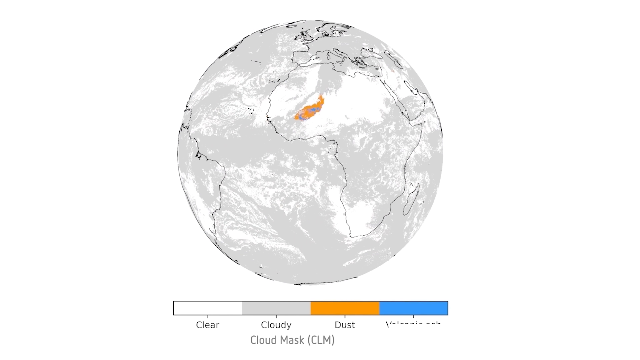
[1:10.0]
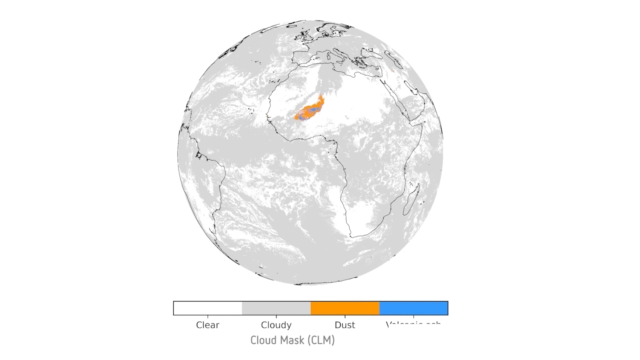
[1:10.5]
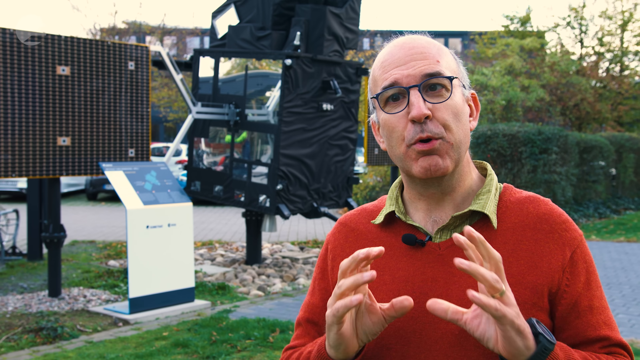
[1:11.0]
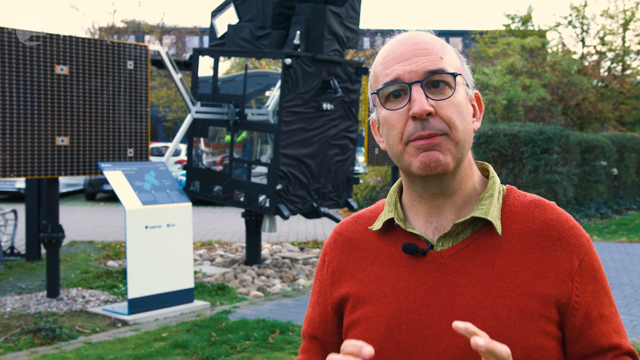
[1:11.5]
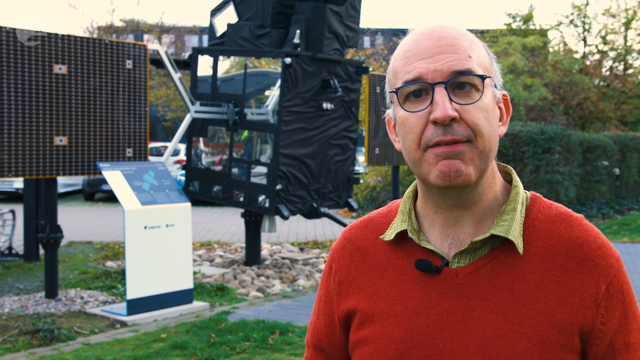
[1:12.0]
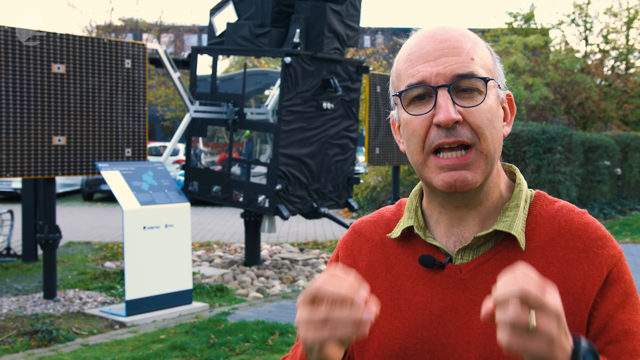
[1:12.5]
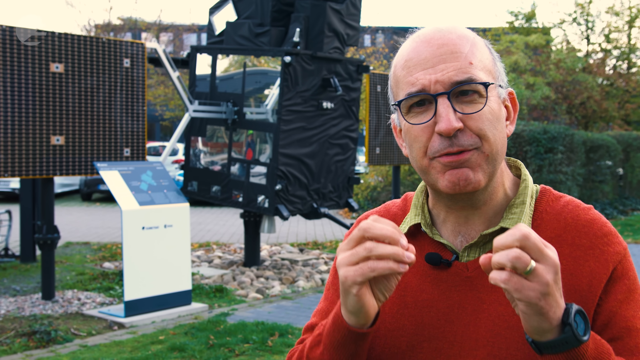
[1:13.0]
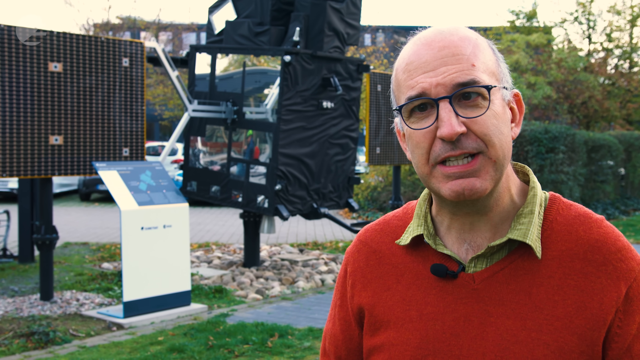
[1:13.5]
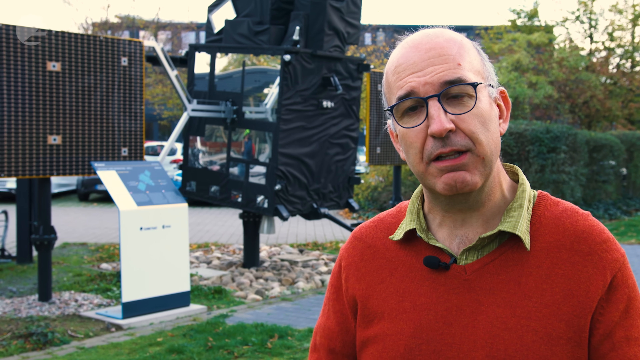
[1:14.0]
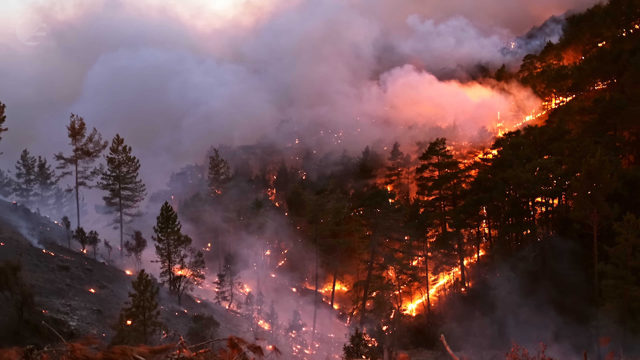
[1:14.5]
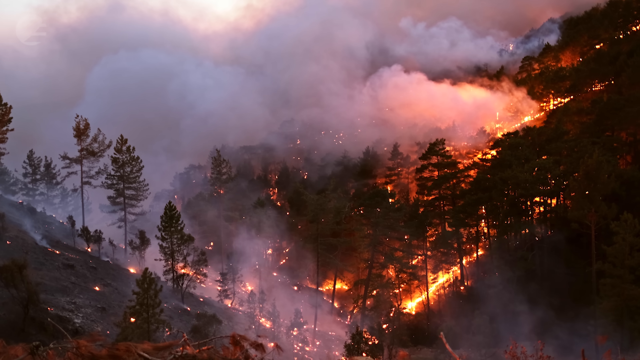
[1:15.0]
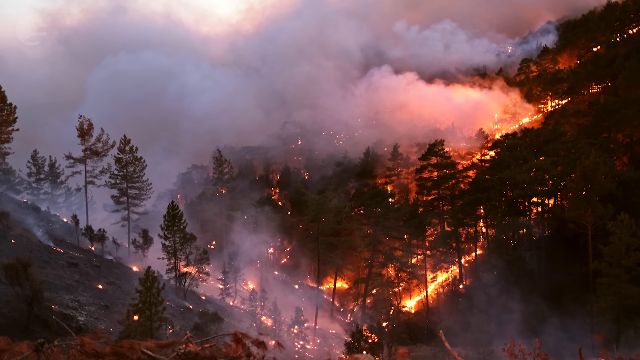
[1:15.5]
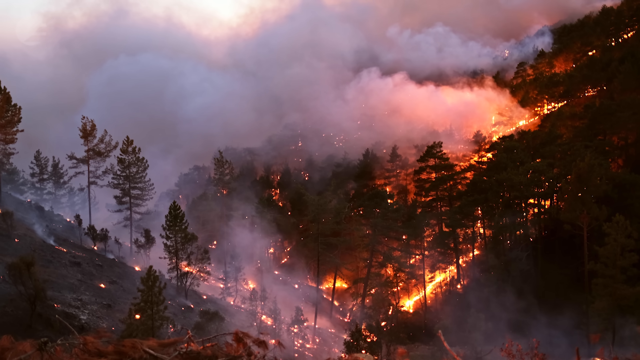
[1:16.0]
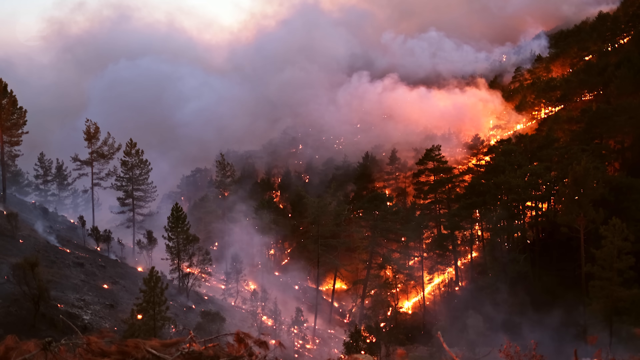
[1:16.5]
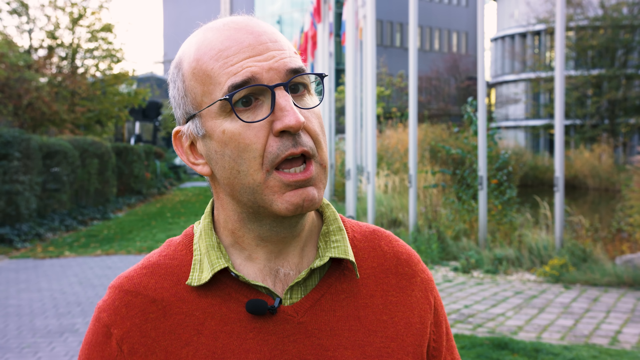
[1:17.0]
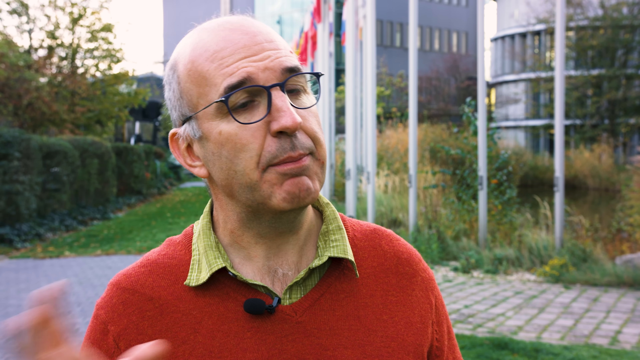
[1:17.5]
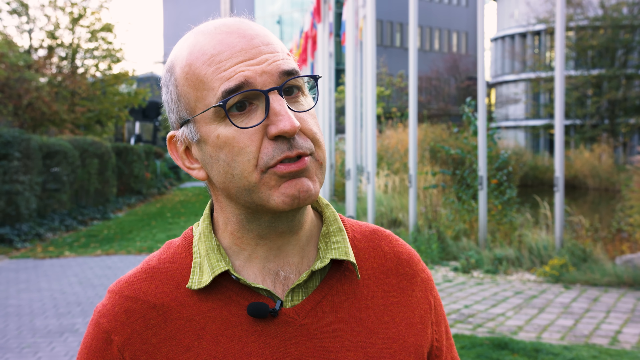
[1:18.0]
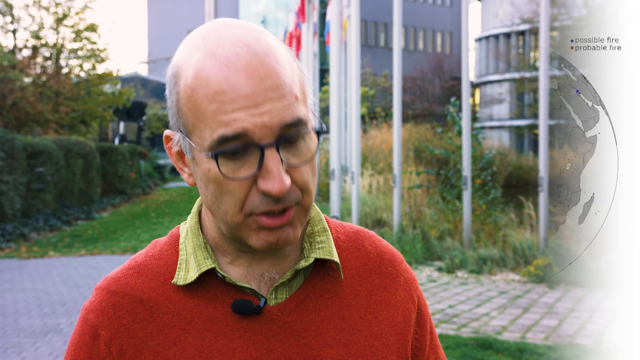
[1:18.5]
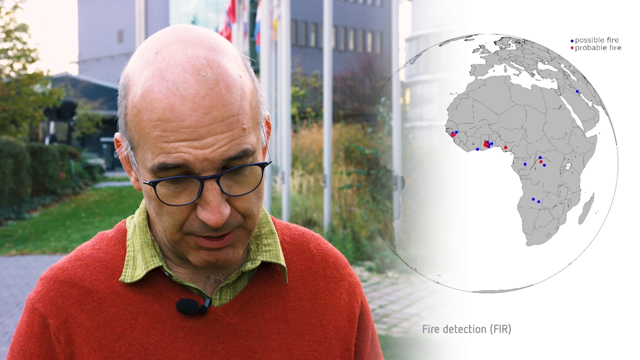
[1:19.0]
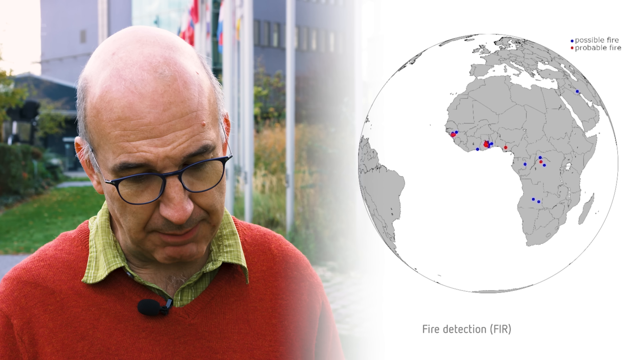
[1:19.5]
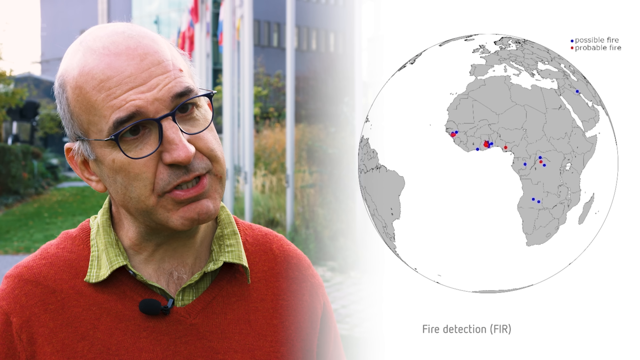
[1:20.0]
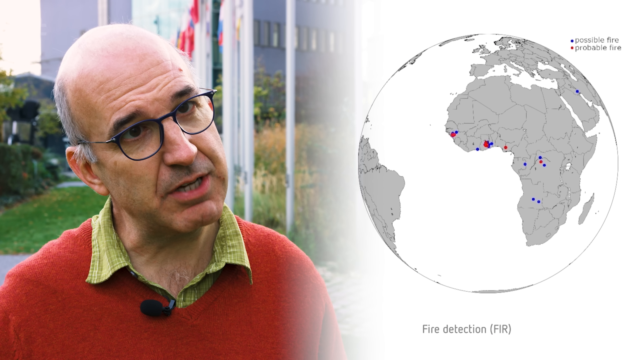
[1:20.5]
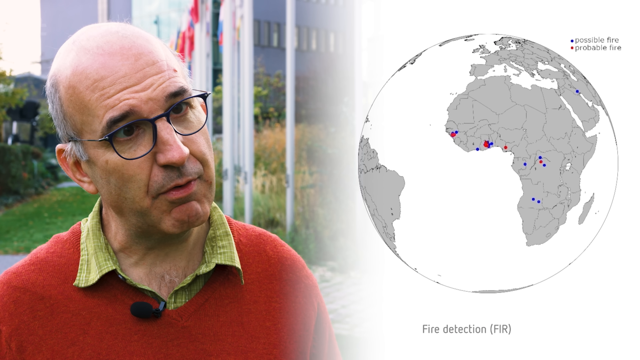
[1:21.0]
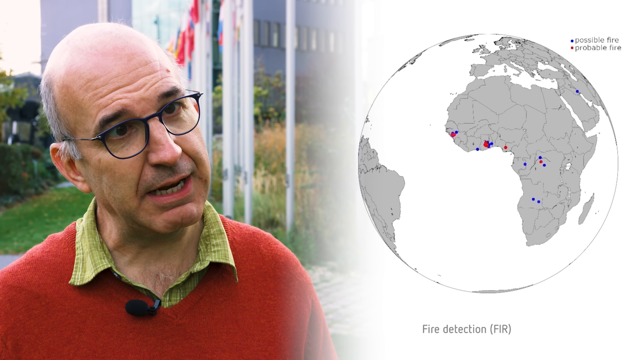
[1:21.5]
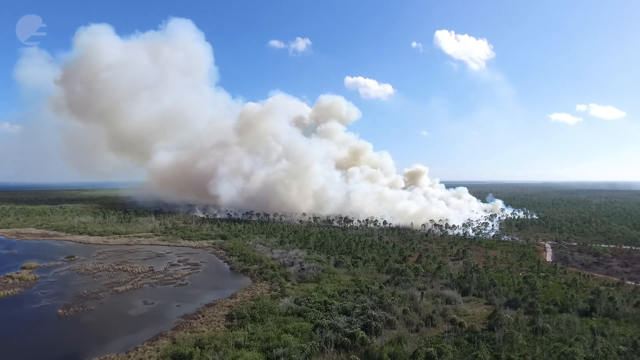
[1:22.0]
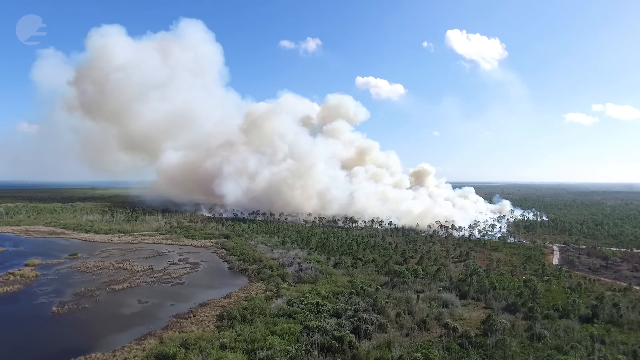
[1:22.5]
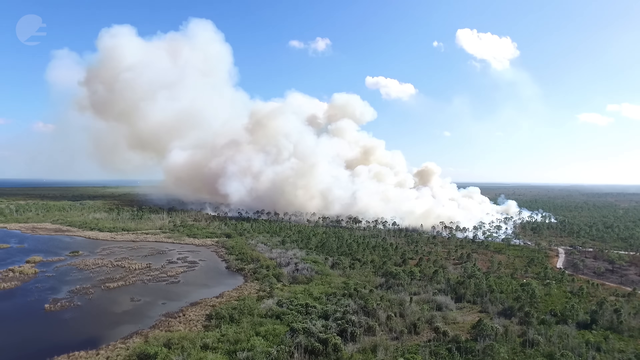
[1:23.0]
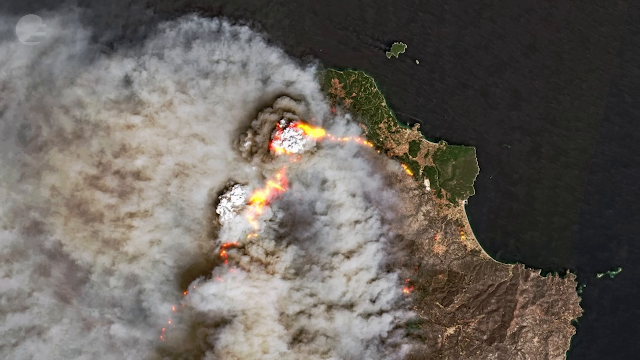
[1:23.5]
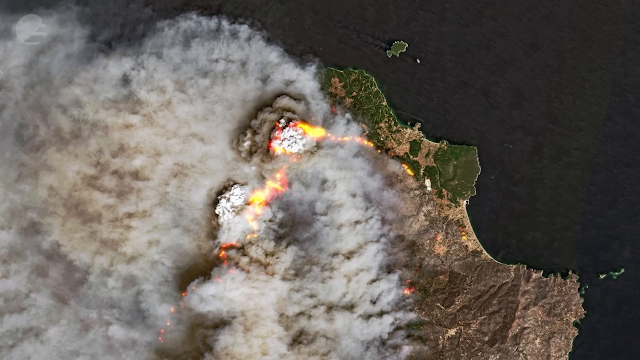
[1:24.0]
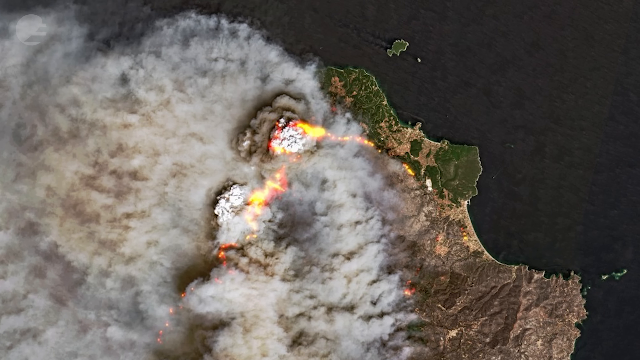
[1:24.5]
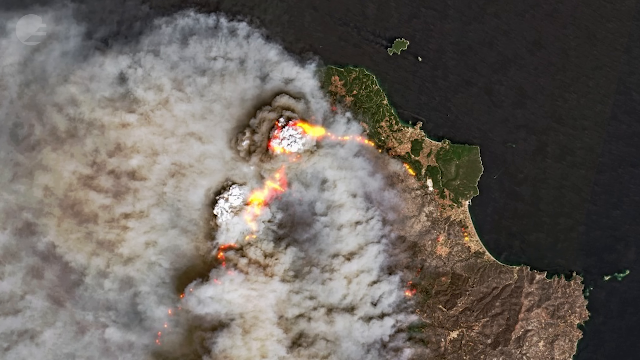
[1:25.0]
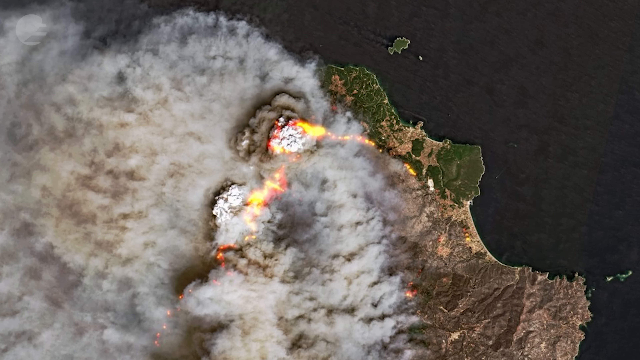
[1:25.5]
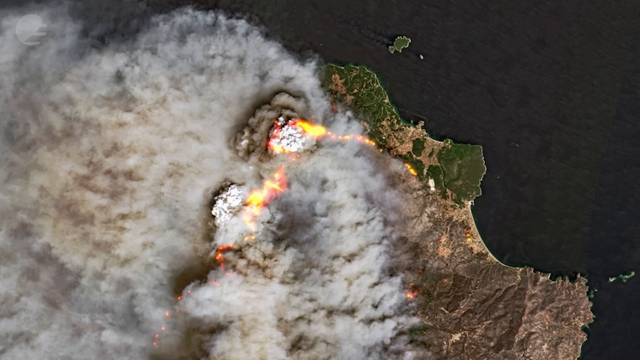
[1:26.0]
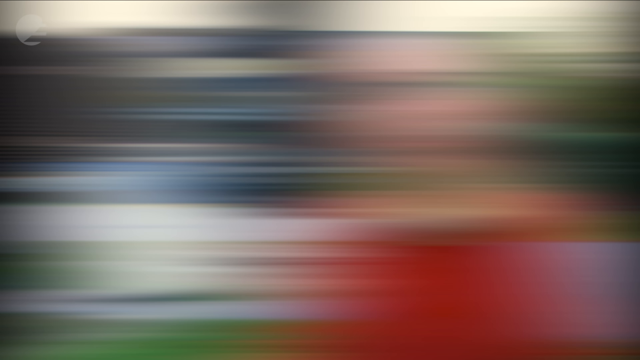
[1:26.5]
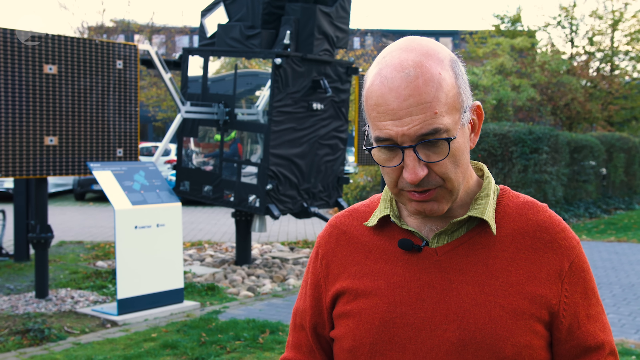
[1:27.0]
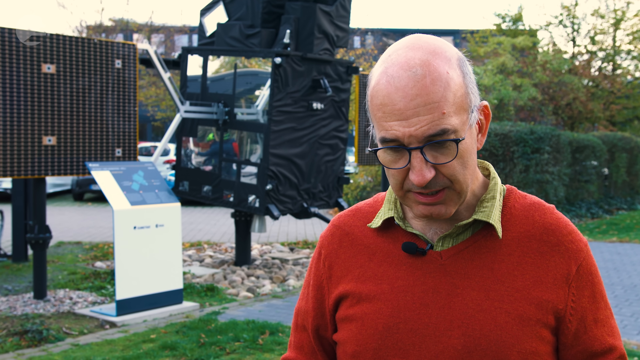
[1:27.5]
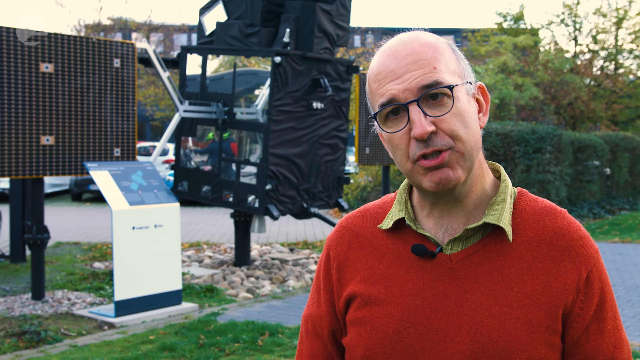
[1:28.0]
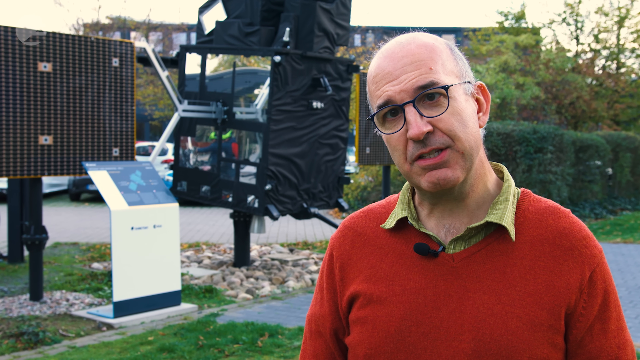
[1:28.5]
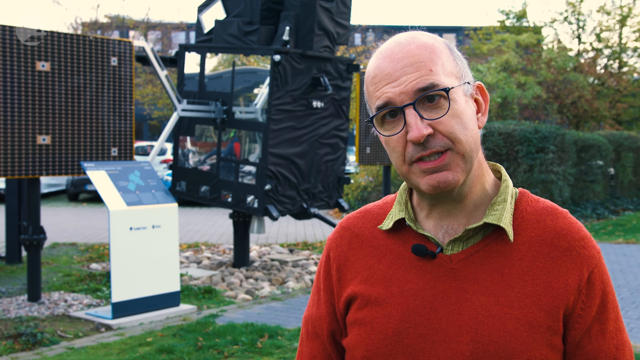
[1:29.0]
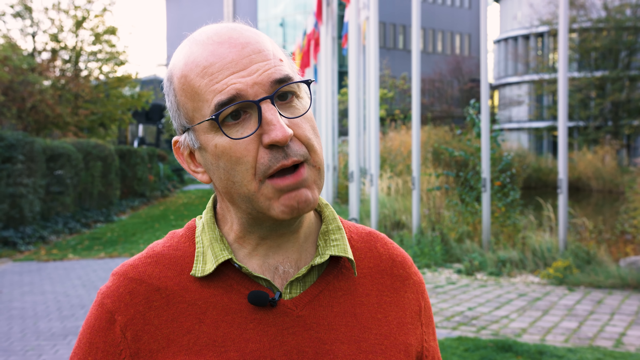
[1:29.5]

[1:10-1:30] A man in a green collared shirt, a red V-neck sweater and glasses talks to the camera, standing outside with a device behind him. The view switches to a hill on fire, with trees burning and smoke visible. Back with the man, flagpoles and a building are visible behind him. Aerial shots of fires with lots of smoke and some flames follow, and then the view returns to the man talking. In some shots, a large black device, apparently the satellite, is behind him; it has lots of glass that looks like mirrors, since something is reflected in them, and lots of very crinkled black fabric along its sides.